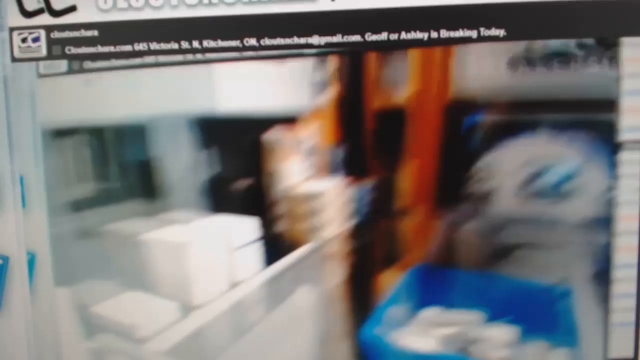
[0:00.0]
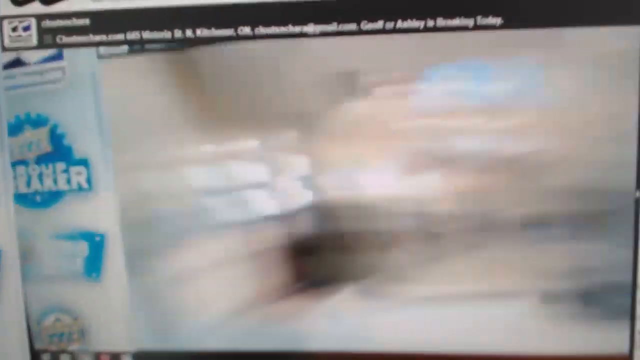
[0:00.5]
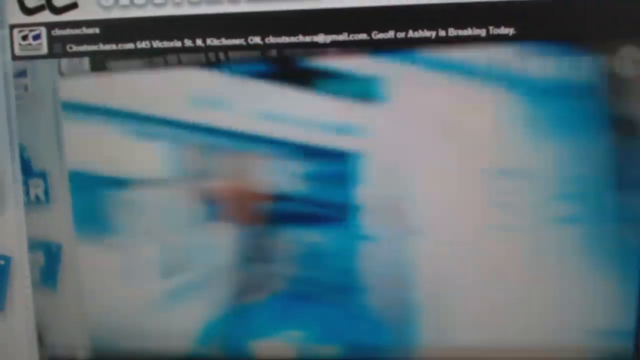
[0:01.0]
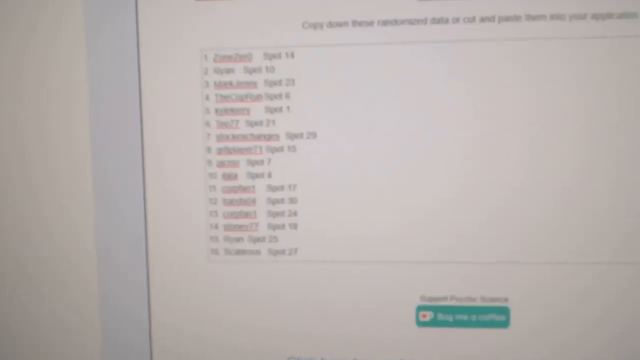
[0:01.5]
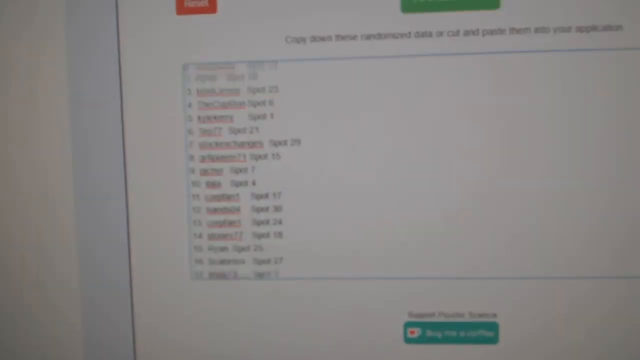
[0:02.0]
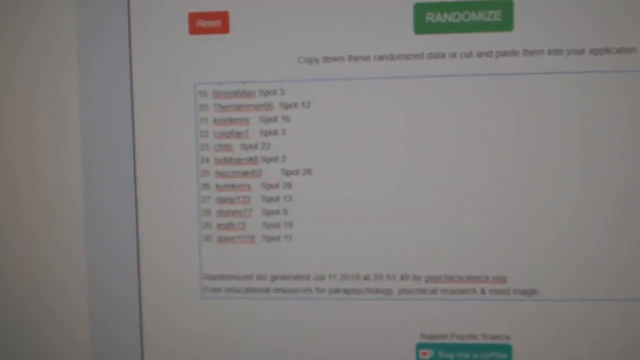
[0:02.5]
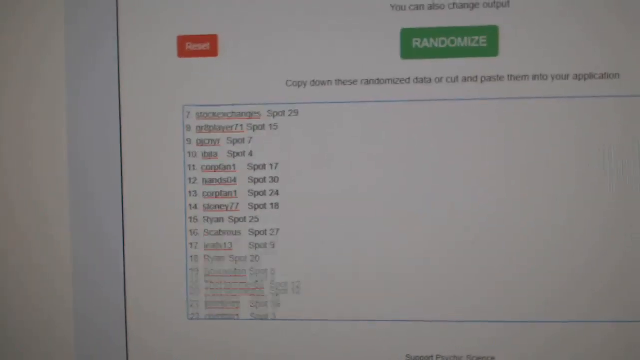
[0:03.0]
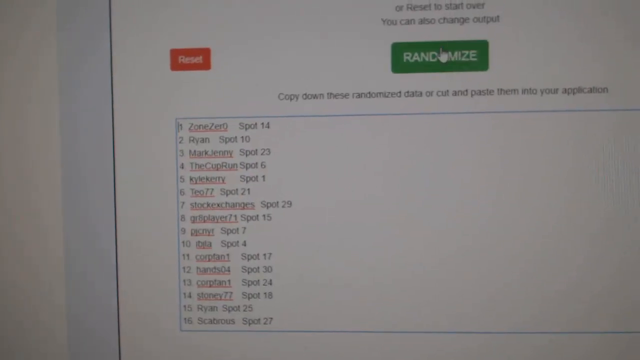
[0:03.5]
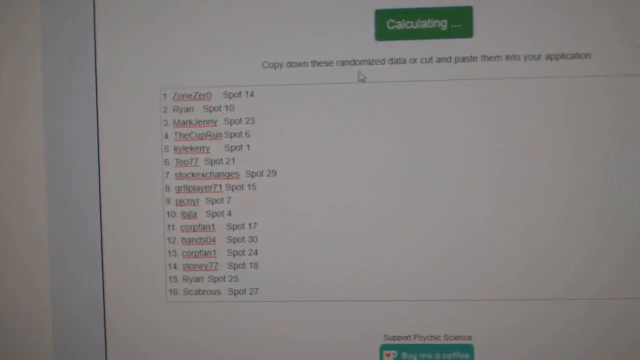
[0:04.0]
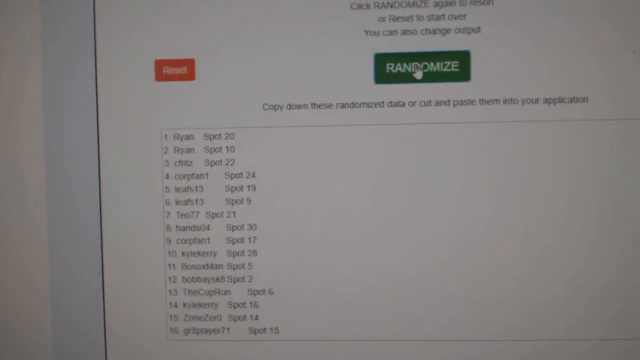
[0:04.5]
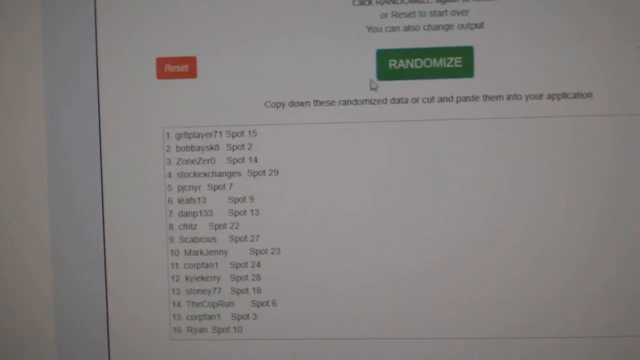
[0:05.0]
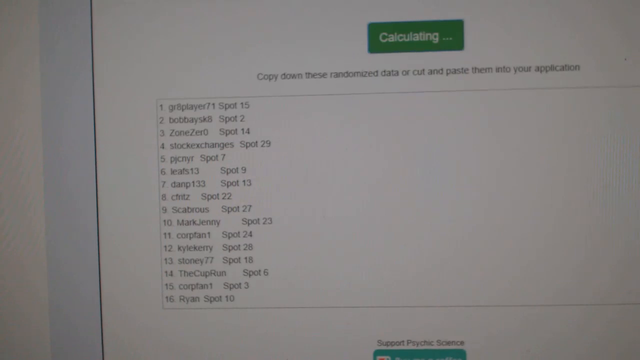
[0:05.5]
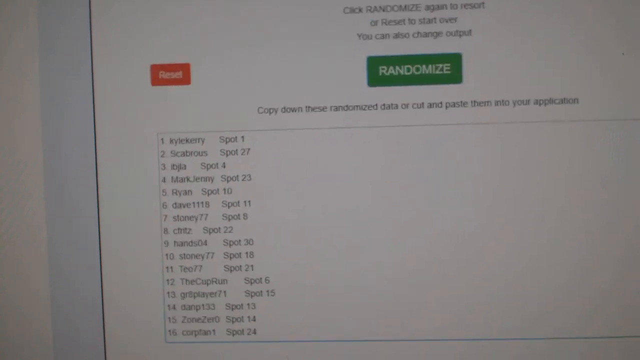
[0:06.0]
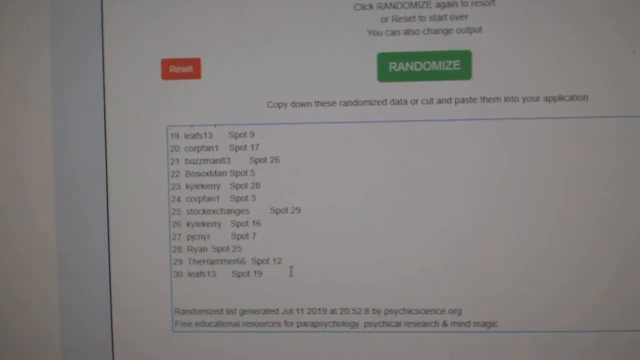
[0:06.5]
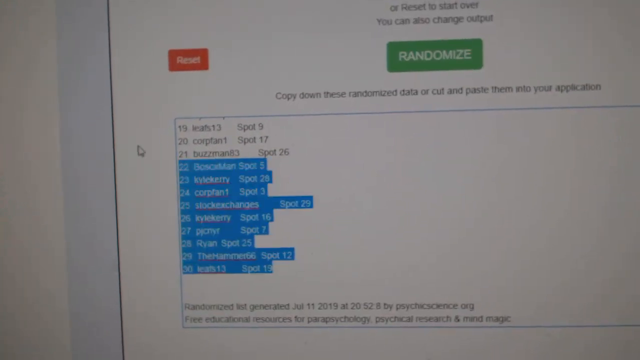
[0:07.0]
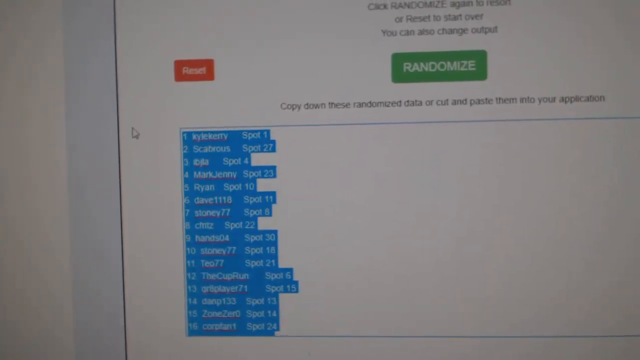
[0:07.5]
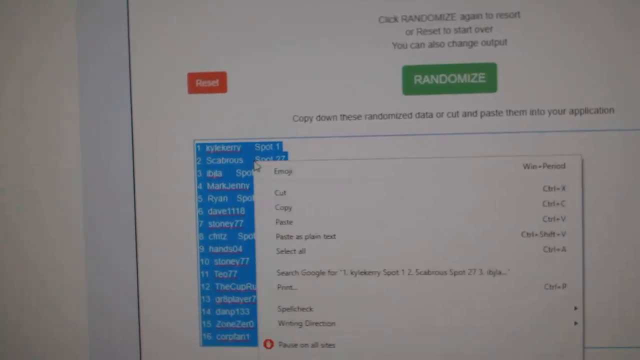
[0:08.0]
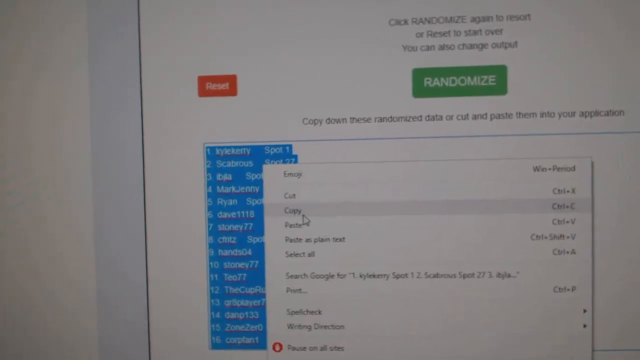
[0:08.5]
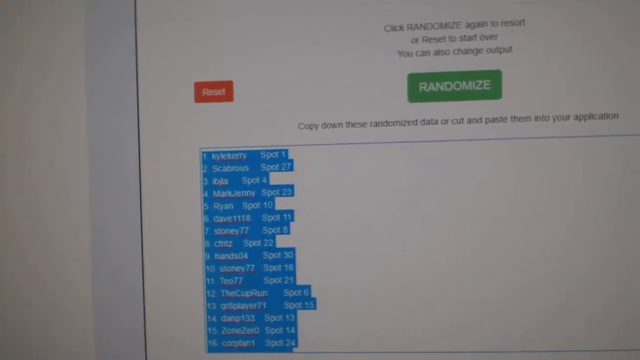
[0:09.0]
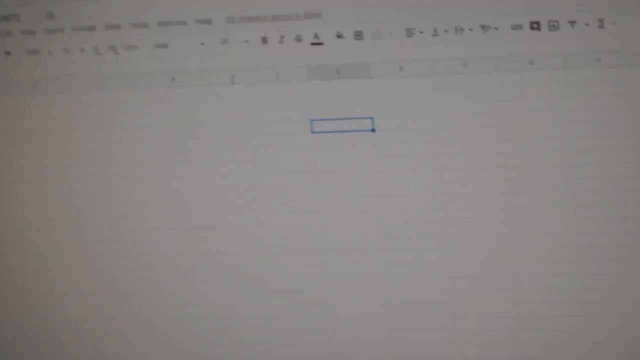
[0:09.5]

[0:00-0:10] A computer screen shows a page where something is randomized and calculated, and then a list scrolls. After the scrolling, the scrolled items are copied and then submitted. When the scrolling is done, text at the top reads "Ashley is driving today". Someone is scrolling on the desktop, then content is copied and pasted, and afterward the view goes back to the computer.